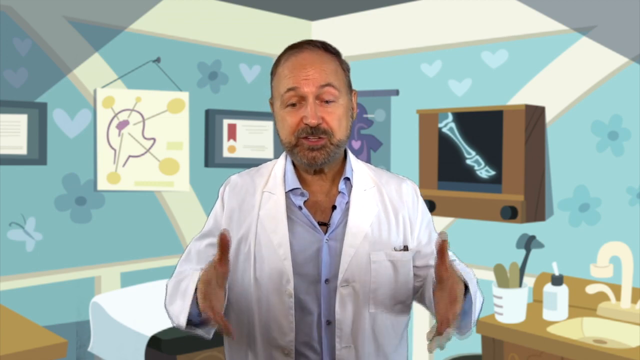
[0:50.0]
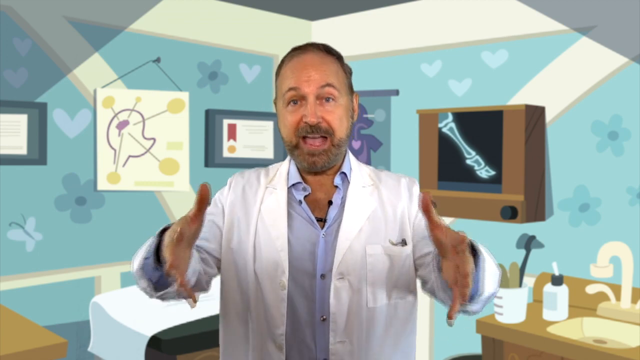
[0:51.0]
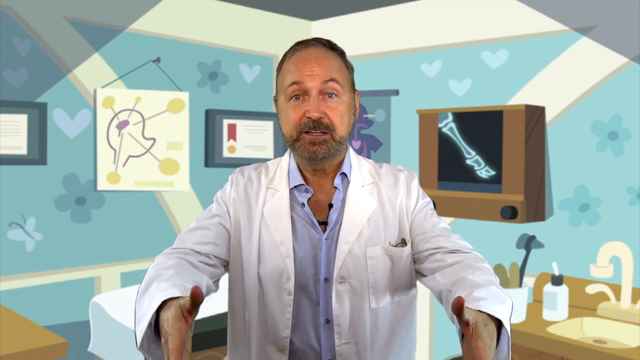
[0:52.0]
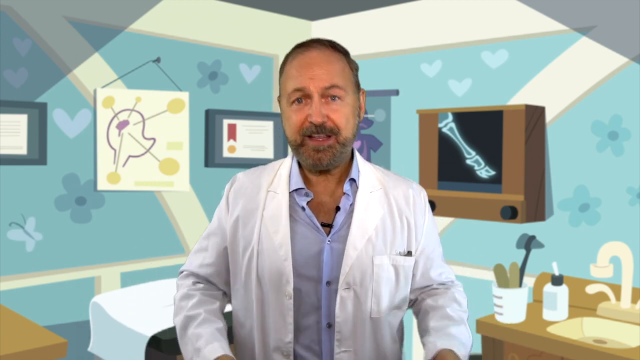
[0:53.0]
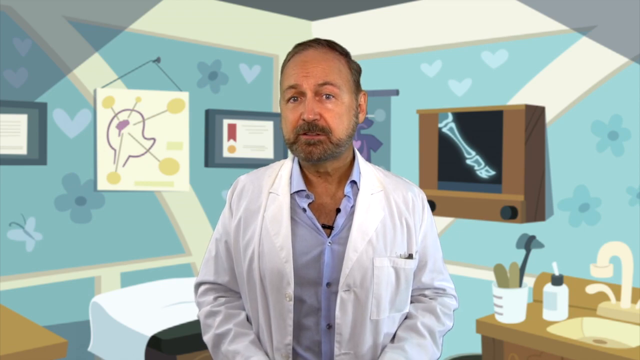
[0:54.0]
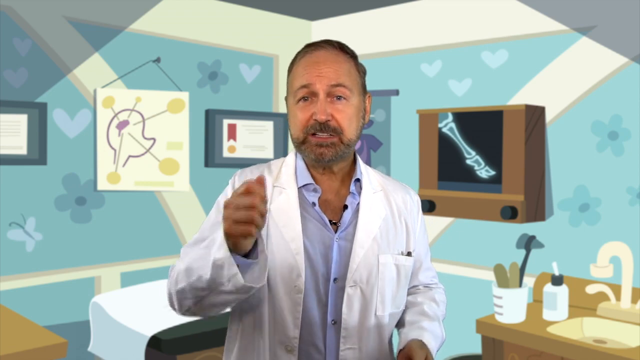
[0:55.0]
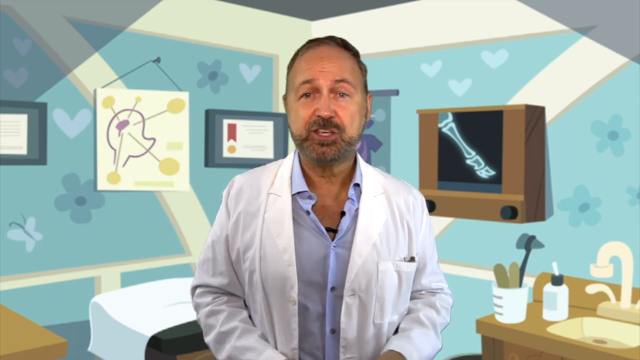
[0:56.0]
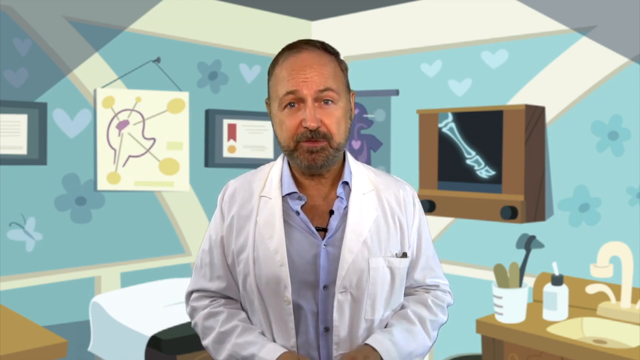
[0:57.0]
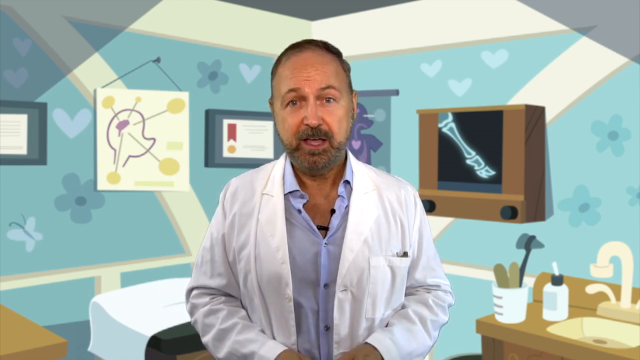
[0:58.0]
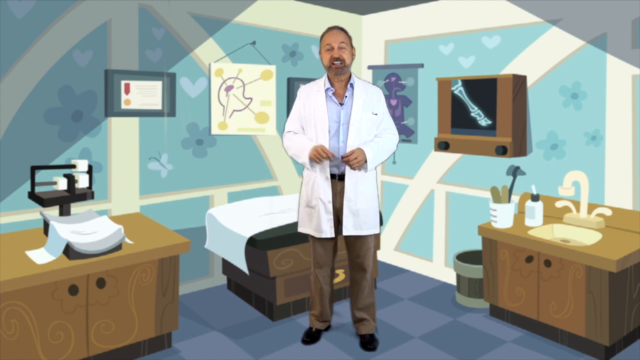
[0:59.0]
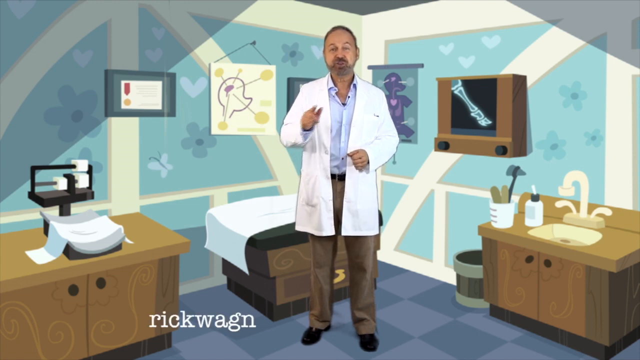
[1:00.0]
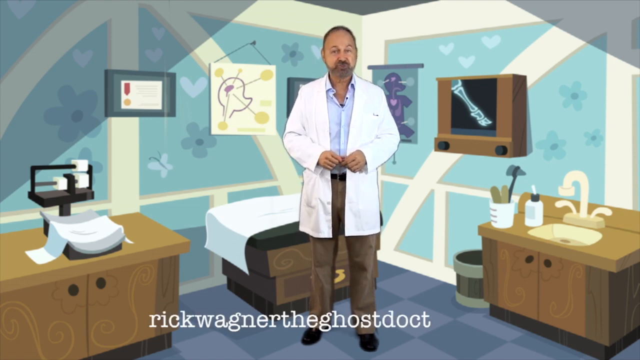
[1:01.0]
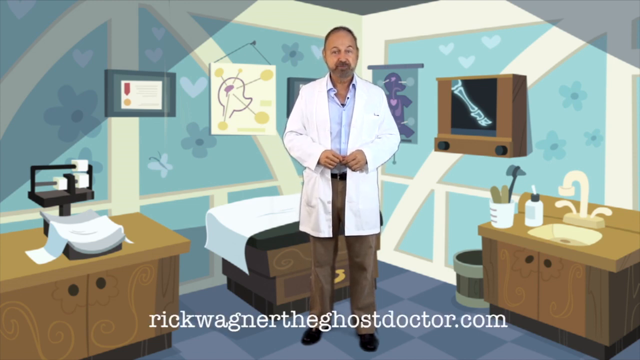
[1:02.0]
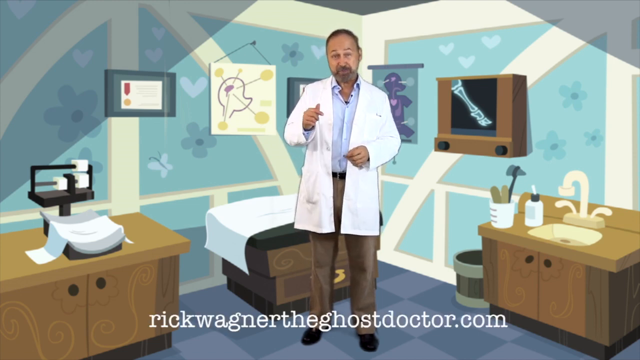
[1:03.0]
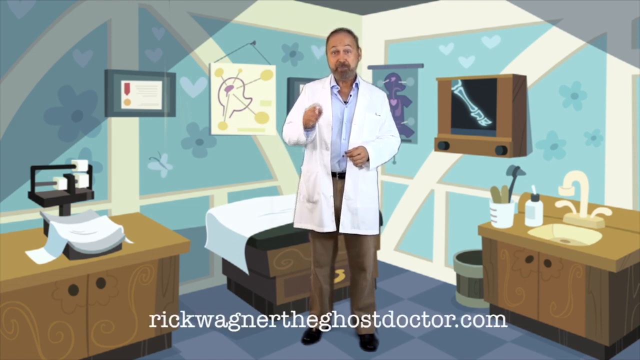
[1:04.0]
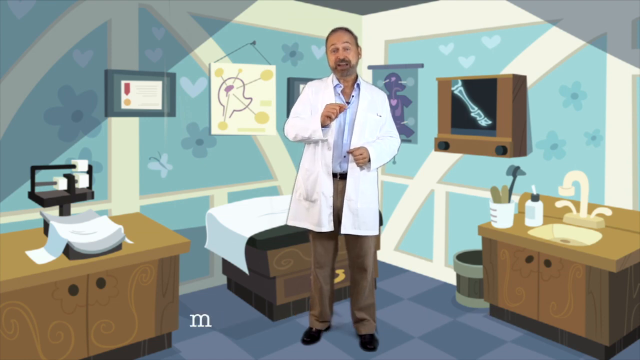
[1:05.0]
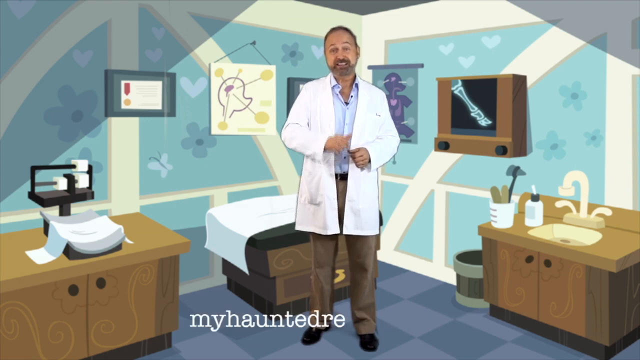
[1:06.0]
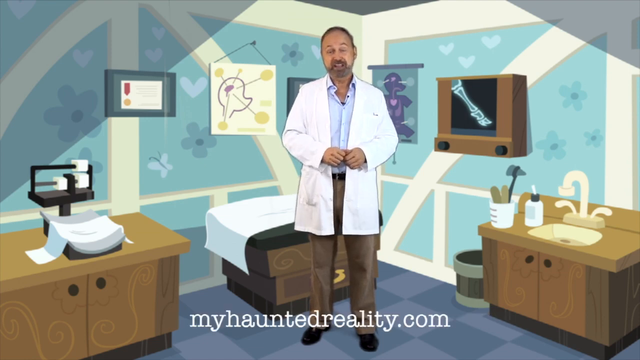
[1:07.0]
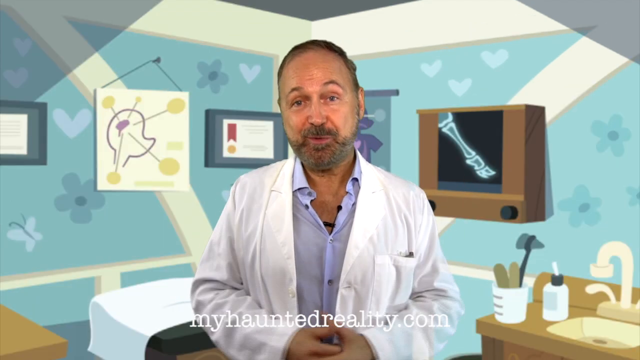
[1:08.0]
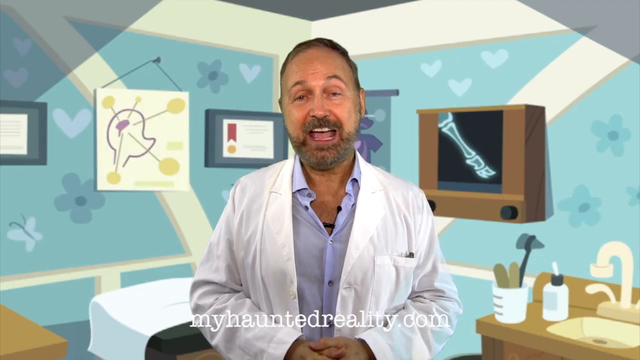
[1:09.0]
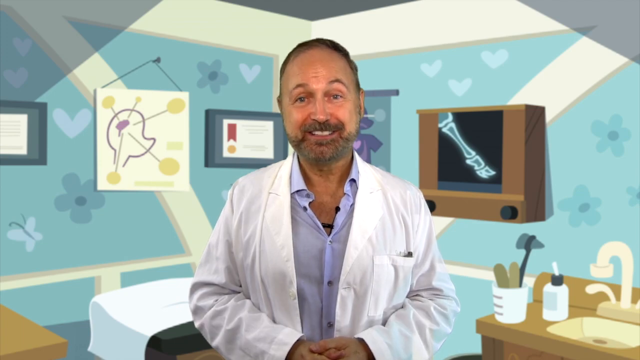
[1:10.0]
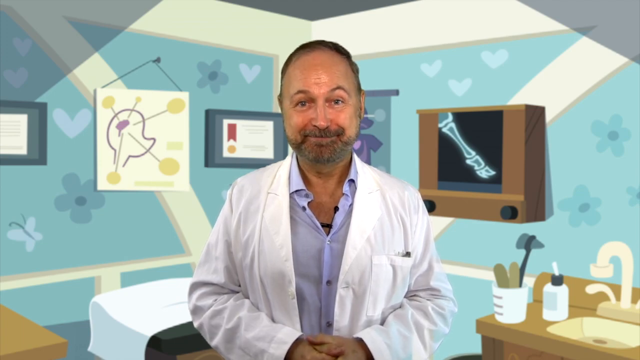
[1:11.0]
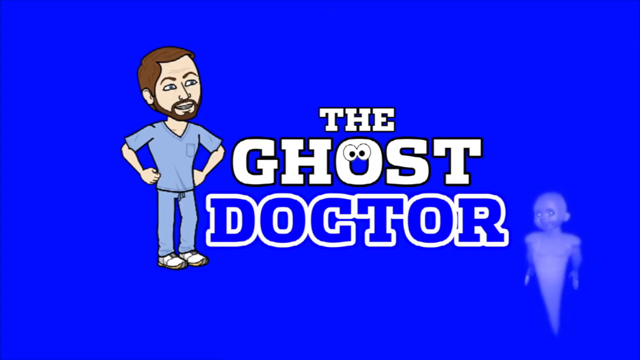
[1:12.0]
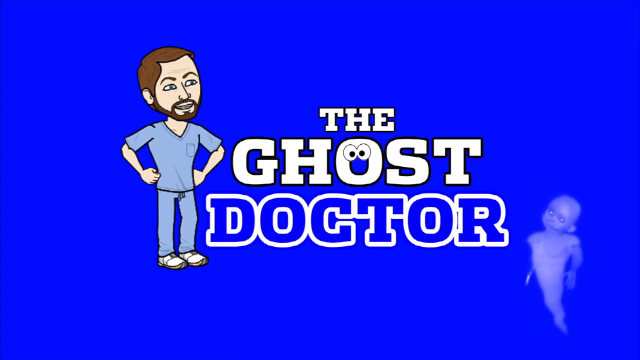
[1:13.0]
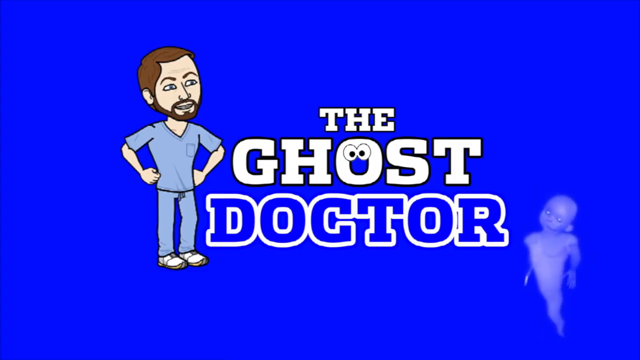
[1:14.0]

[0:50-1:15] The doctor, a European man wearing a white overall, a dust coat, explains using signs and speaking, and looks sharp. There is a bed behind for the sick and a running water tap behind. A wall is blue and white striped. There is a desk behind for keeping files, with a lot of files on it. There are different pictures on the wall, including a picture of a human body and a picture of a tubular. Near the water tap there is a container for medicine and doctor's equipment. The carpet in the examination room is drafted, and the room looks clean. He explains using a picture of a human head.